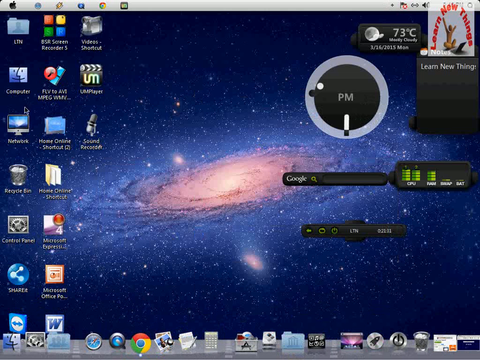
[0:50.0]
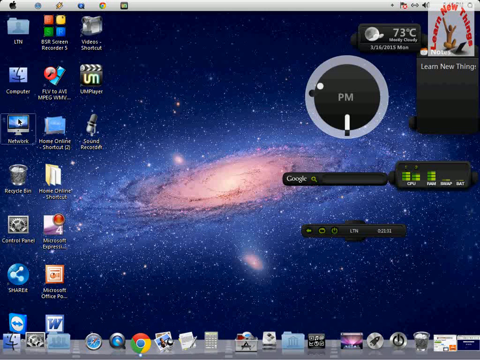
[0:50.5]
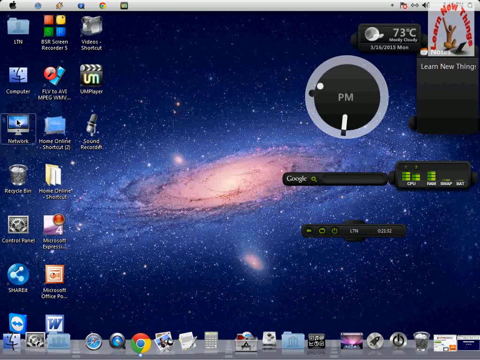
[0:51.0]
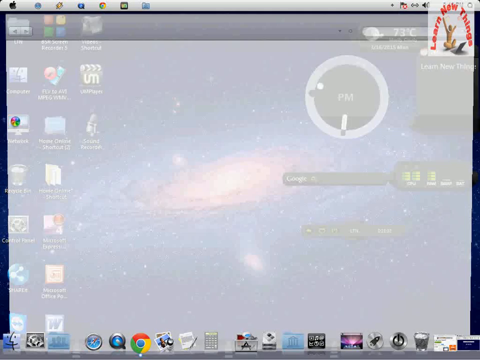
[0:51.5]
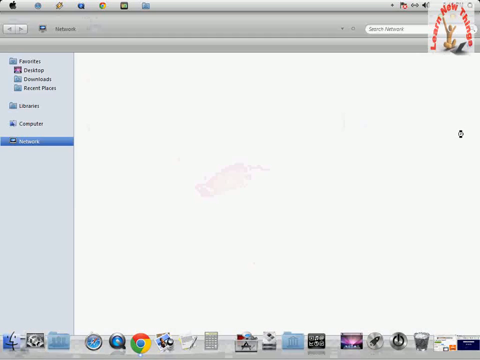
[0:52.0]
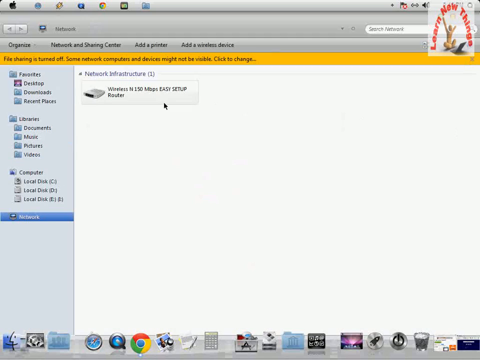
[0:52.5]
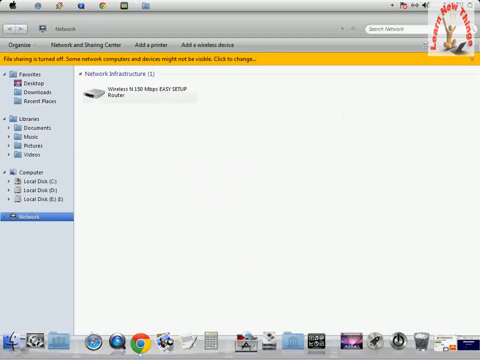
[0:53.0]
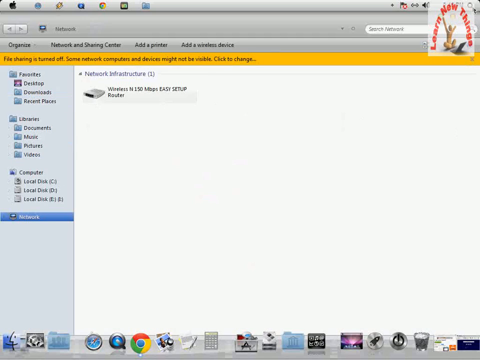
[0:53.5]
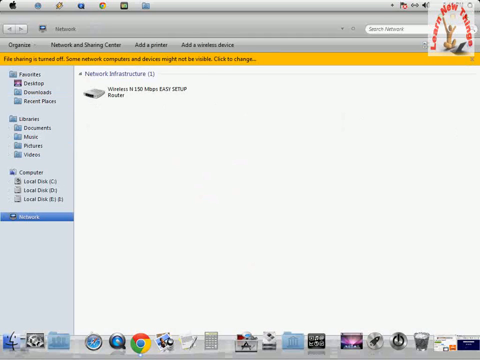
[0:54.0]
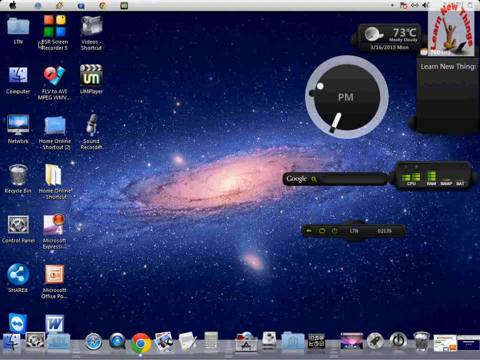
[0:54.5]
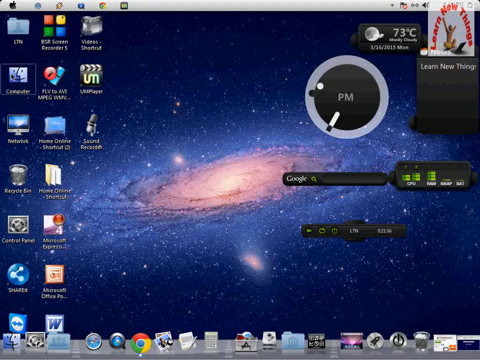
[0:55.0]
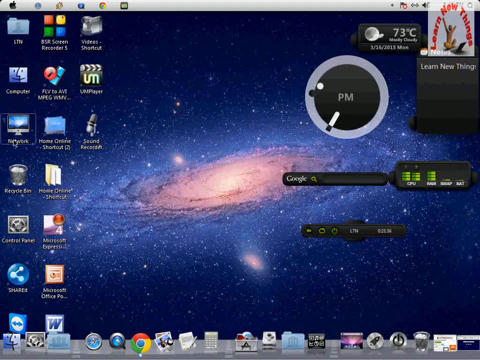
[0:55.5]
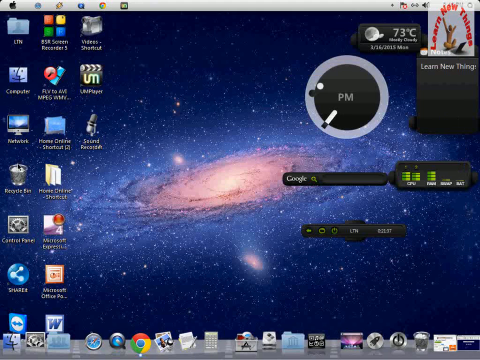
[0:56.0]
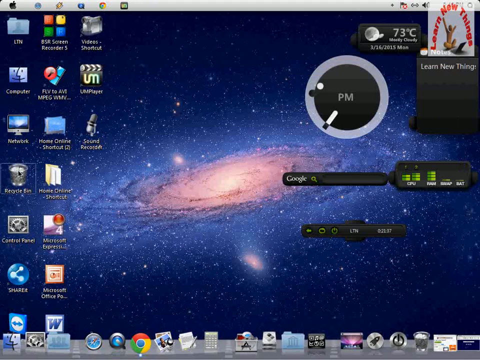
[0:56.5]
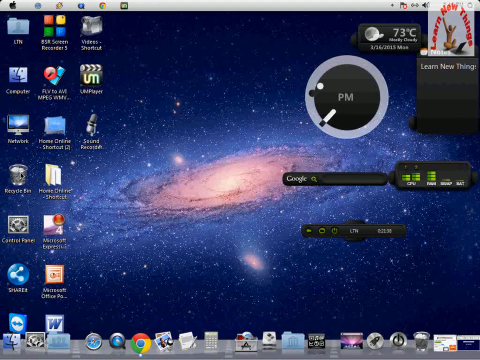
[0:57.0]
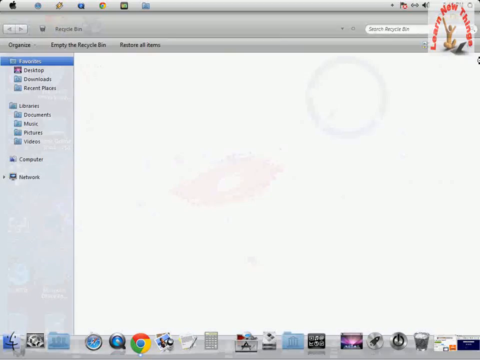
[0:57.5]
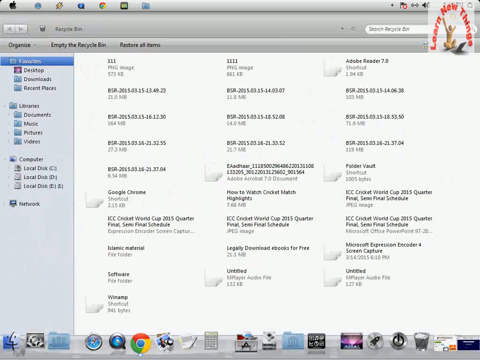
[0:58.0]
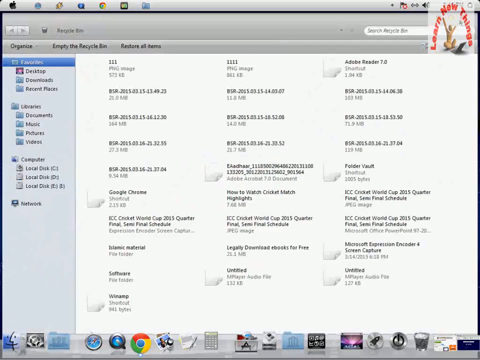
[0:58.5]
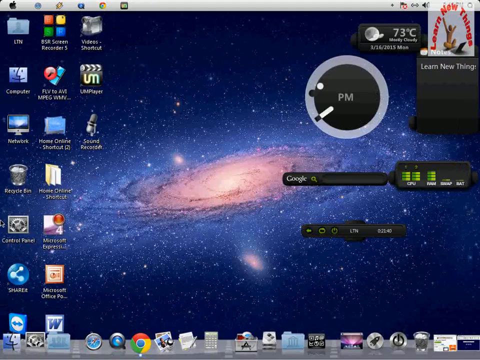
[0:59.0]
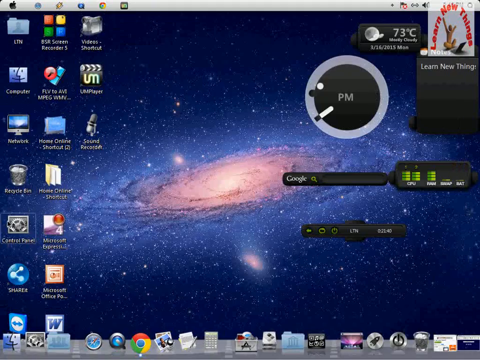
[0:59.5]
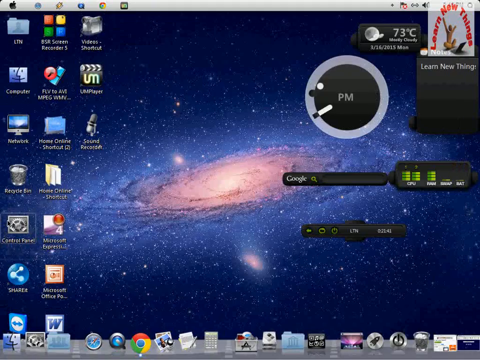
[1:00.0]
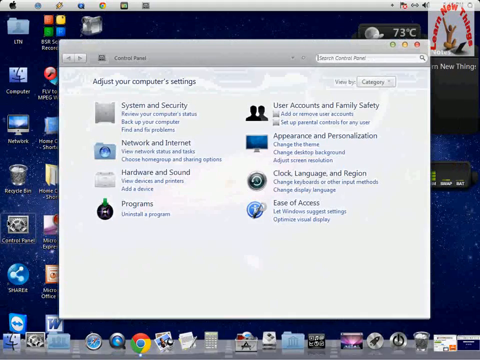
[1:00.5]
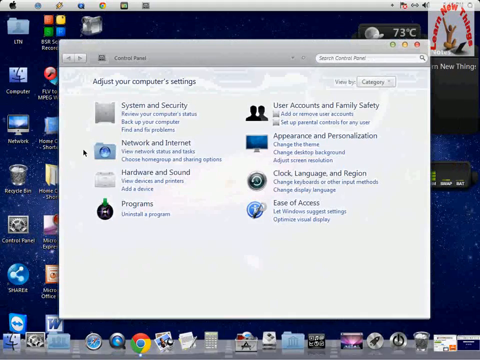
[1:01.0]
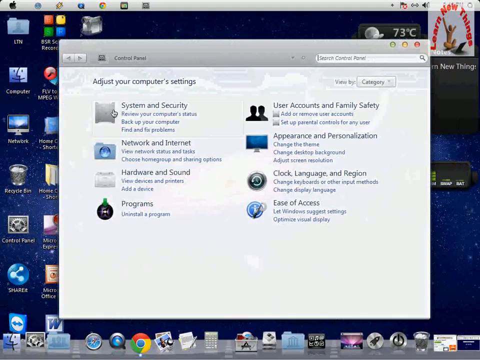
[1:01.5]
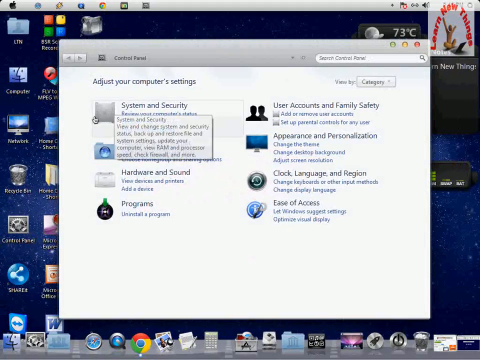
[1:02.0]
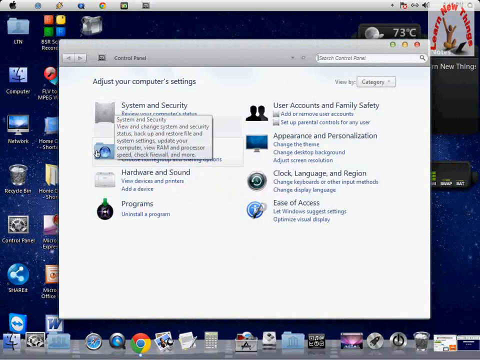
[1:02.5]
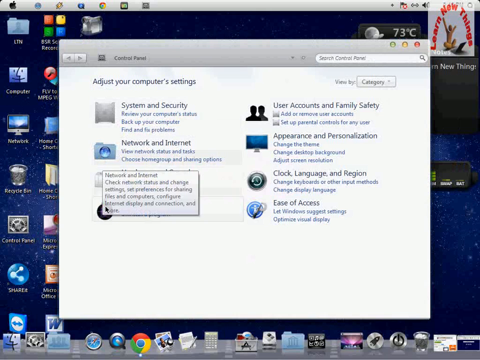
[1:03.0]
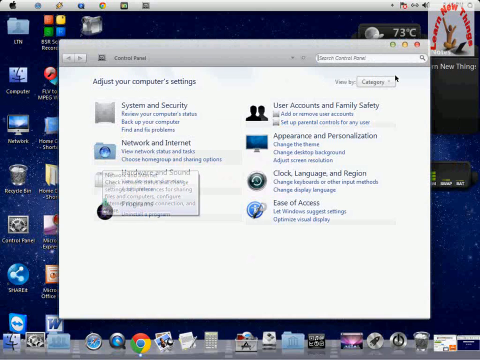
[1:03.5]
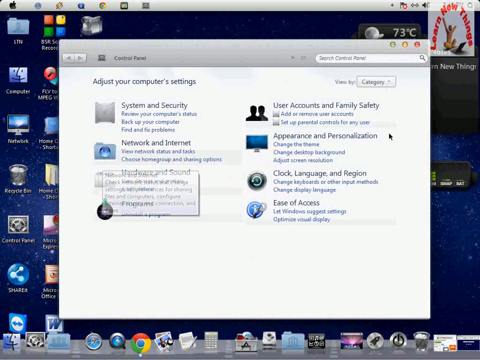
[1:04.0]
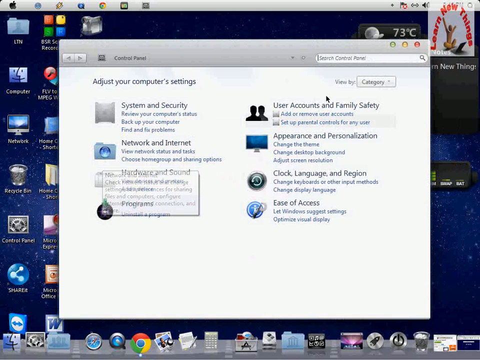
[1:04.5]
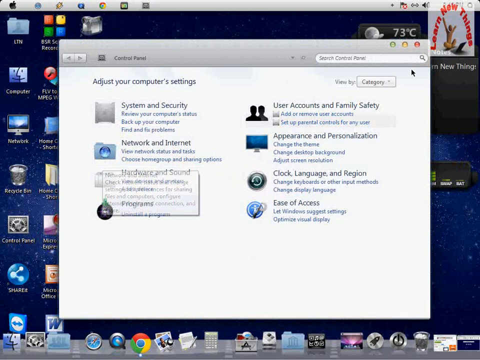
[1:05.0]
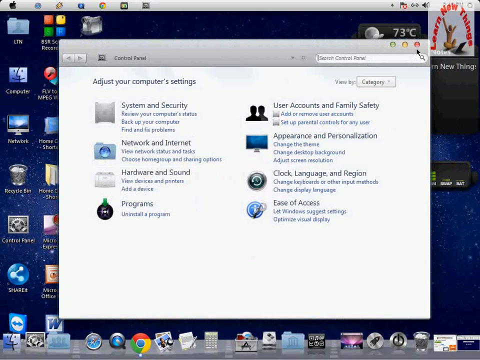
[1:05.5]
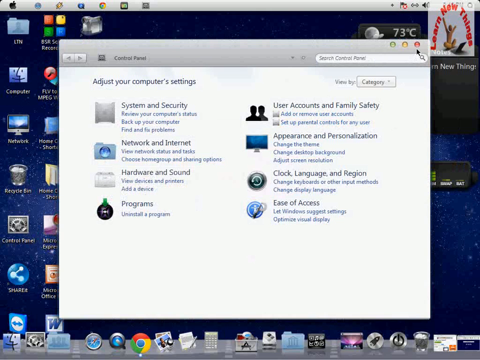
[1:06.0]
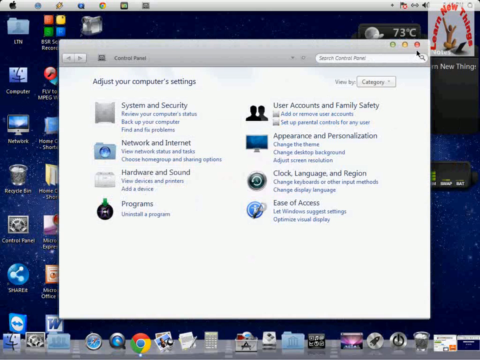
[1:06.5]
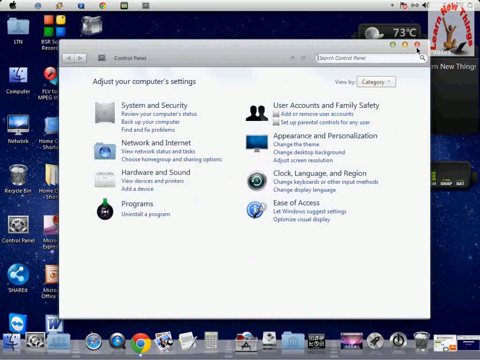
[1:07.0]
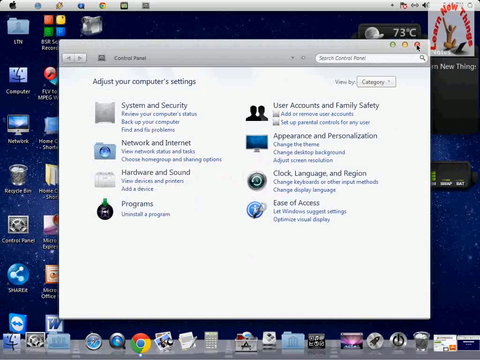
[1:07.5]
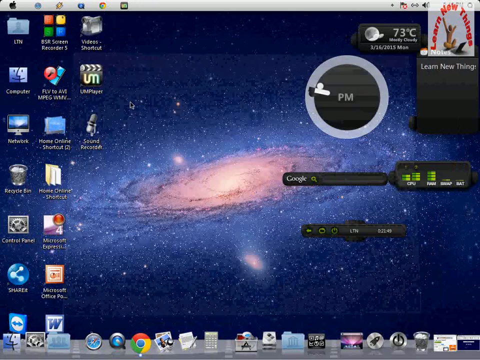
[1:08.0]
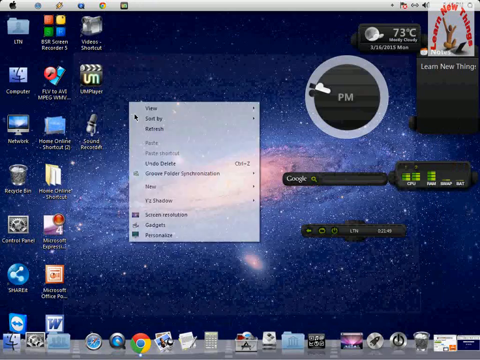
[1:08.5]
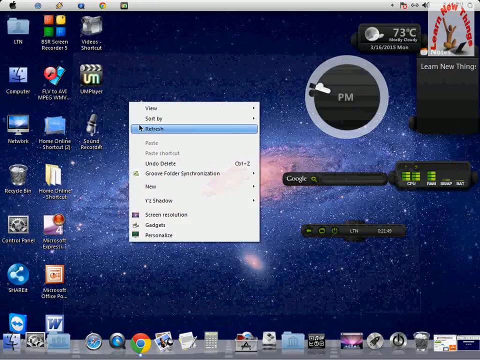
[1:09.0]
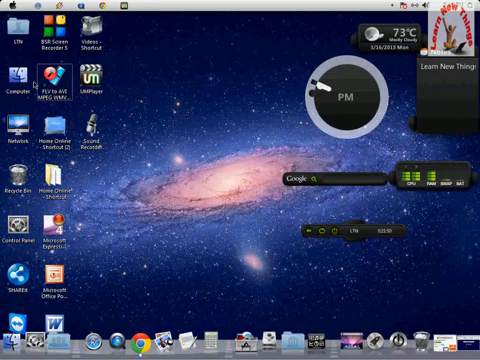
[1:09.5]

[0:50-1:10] "73 degrees" shows in the upper right-hand corner. The person clicks on an icon on the left side of the screen that appears to be Network; the window's text is too blurry to read, and they exit out. They then hover over and open the recycling bin, which is right under Network and seems to have things in it. The contents are blurry, but there looks like a png image labeled "111", an item labeled "Adobe reader 7.0", and at the bottom two untitled documents. The person exits out. Next they are in the control panel and look about to click on system and security, but instead go through each of the options, then go to the search area, and then hit the red exit button.